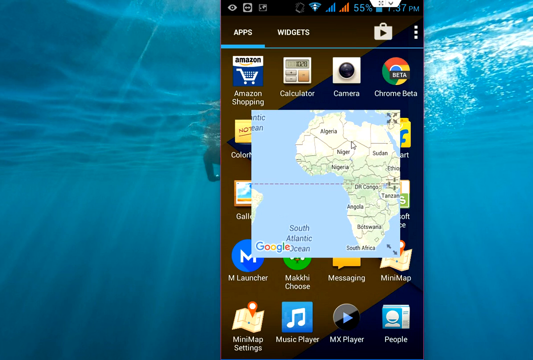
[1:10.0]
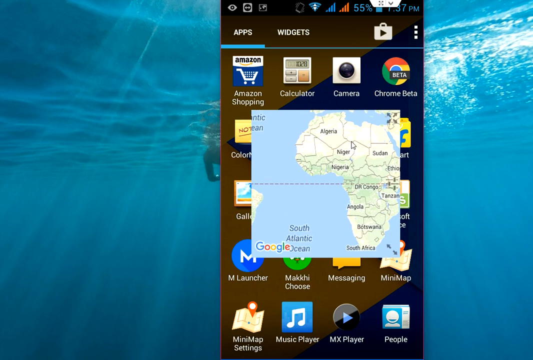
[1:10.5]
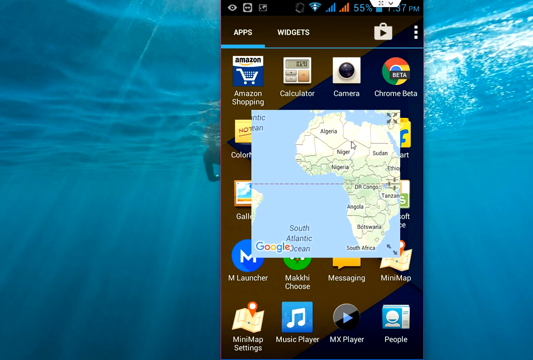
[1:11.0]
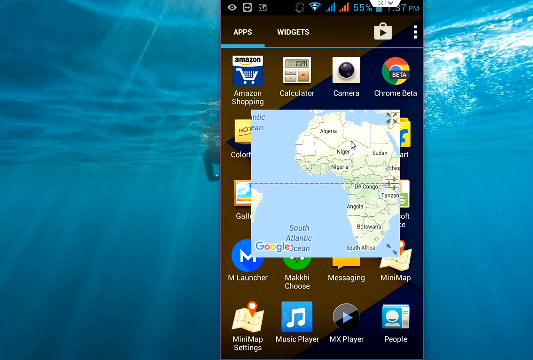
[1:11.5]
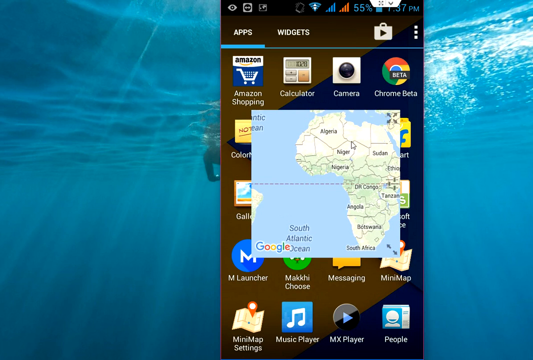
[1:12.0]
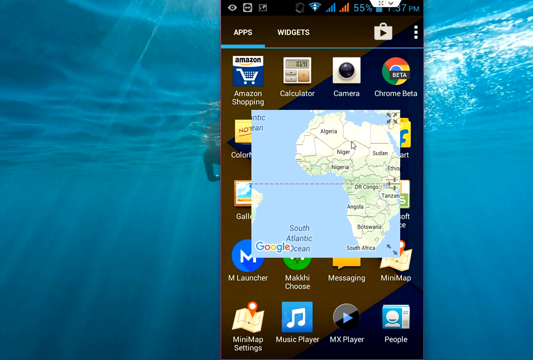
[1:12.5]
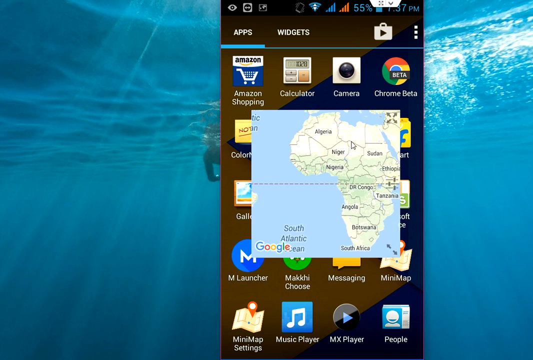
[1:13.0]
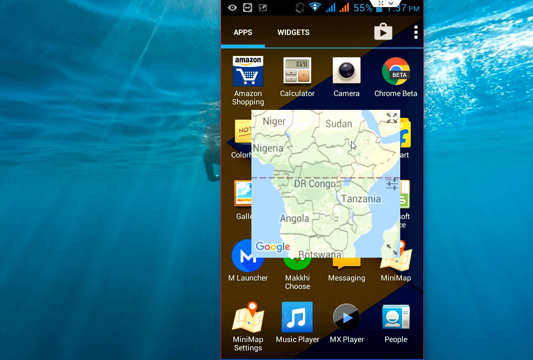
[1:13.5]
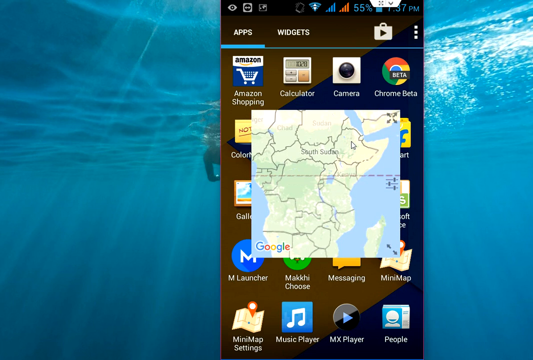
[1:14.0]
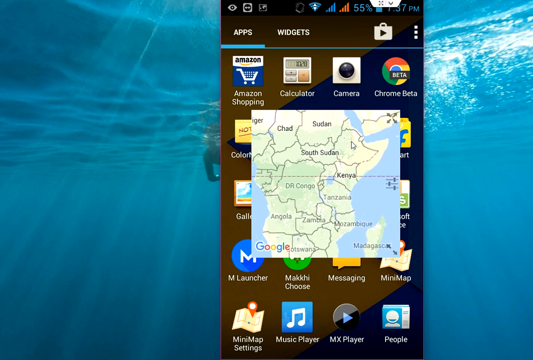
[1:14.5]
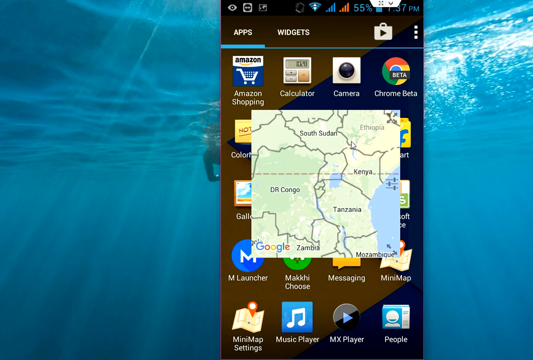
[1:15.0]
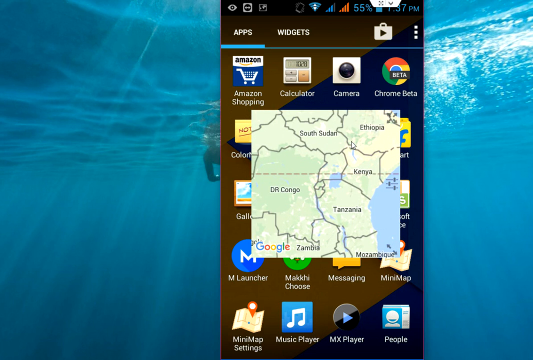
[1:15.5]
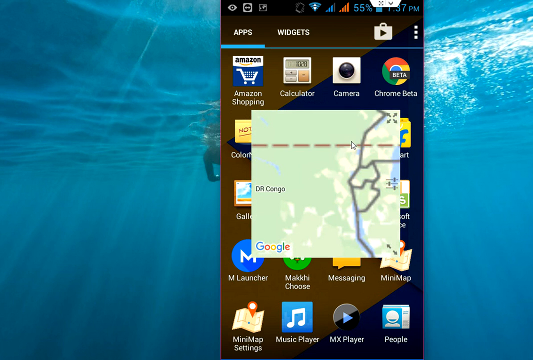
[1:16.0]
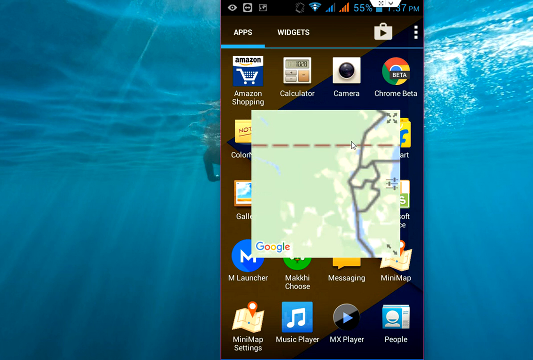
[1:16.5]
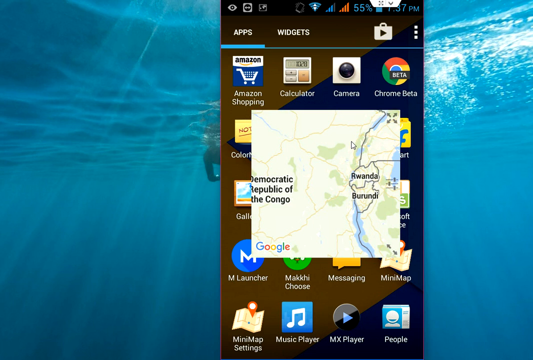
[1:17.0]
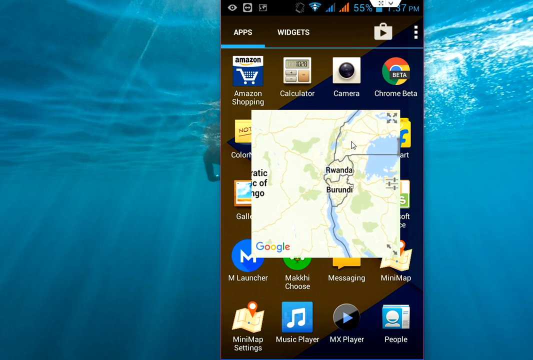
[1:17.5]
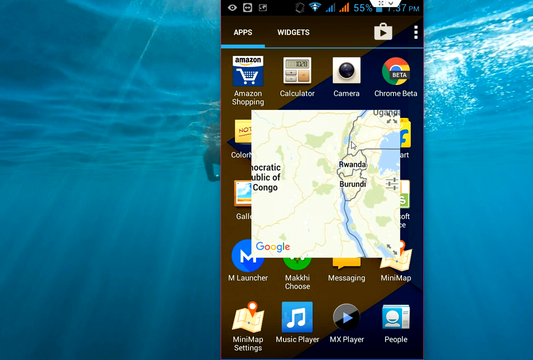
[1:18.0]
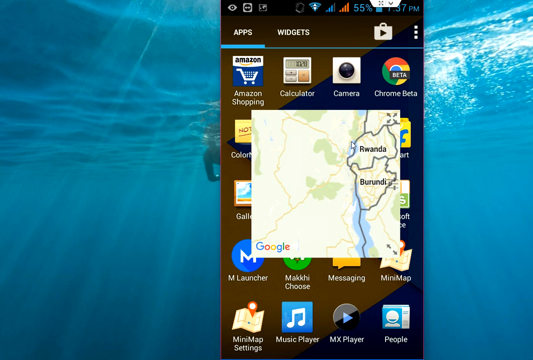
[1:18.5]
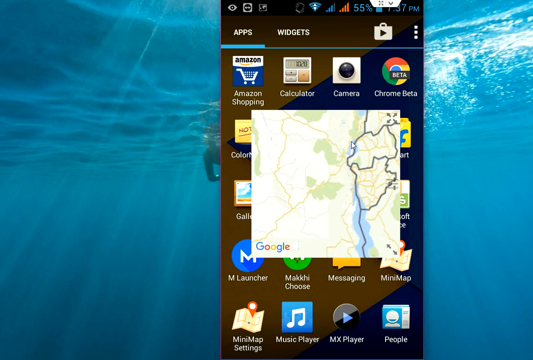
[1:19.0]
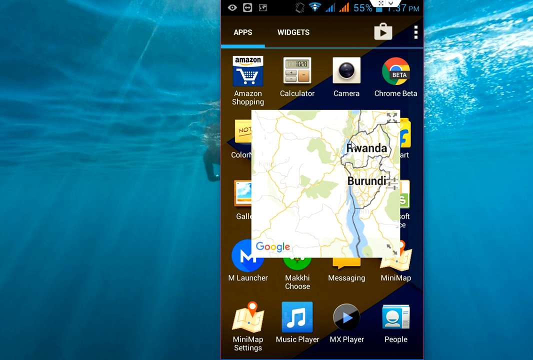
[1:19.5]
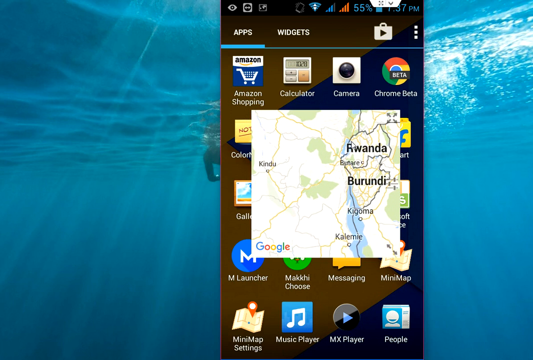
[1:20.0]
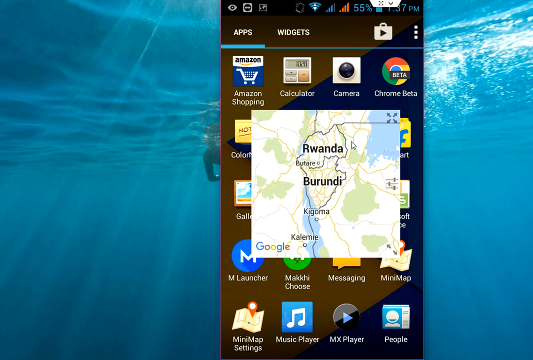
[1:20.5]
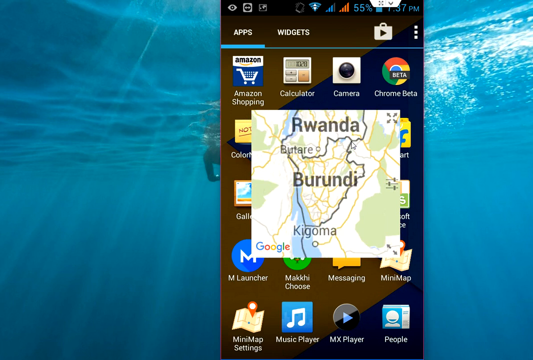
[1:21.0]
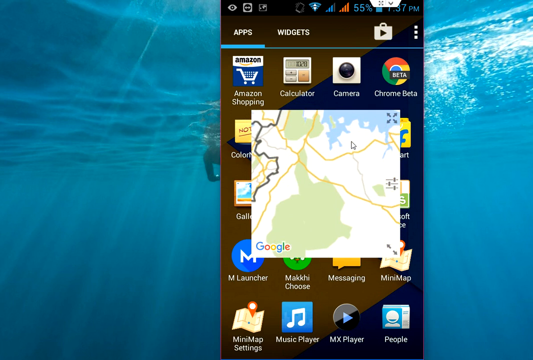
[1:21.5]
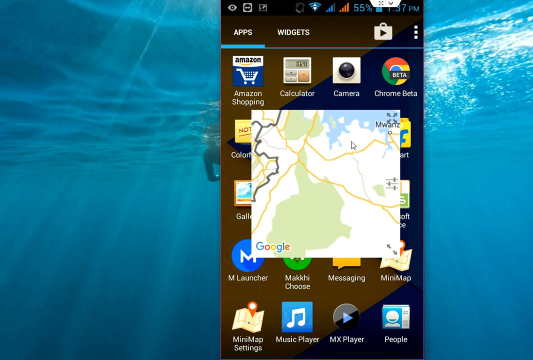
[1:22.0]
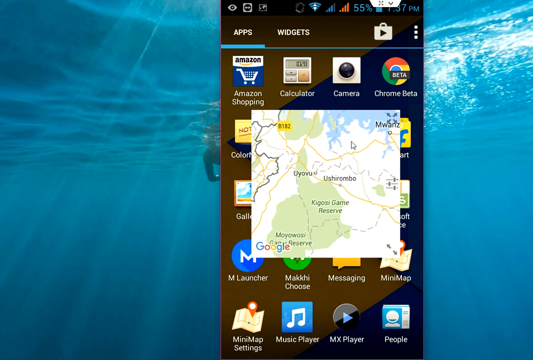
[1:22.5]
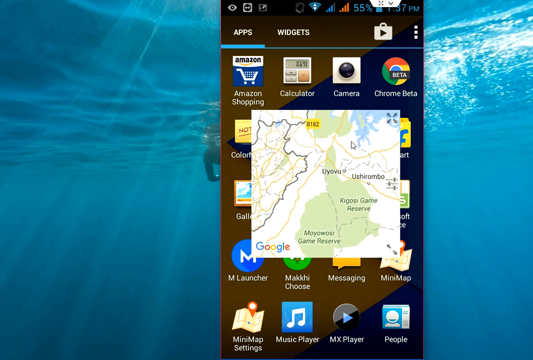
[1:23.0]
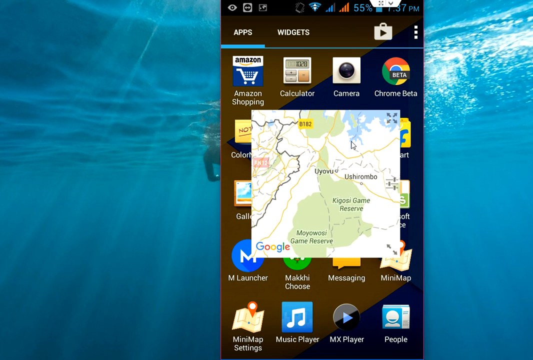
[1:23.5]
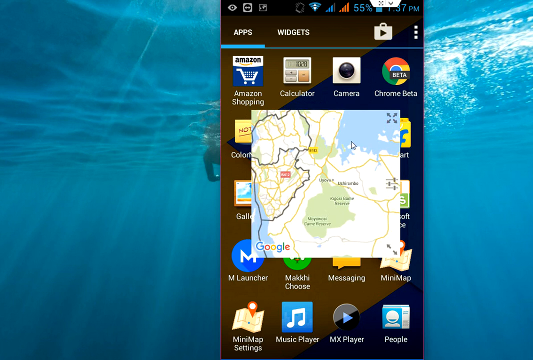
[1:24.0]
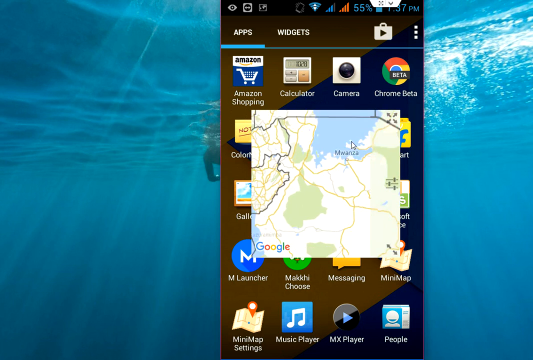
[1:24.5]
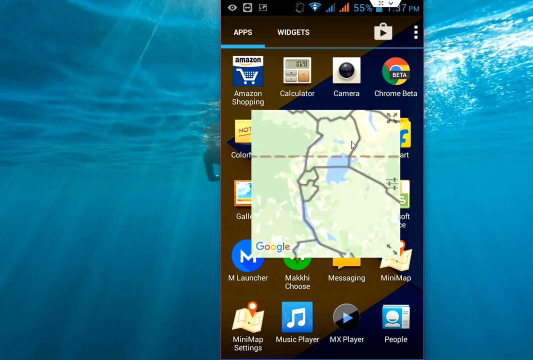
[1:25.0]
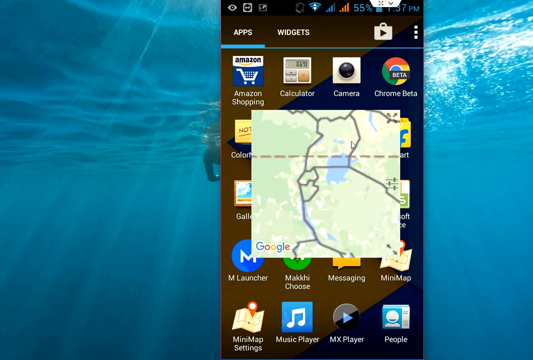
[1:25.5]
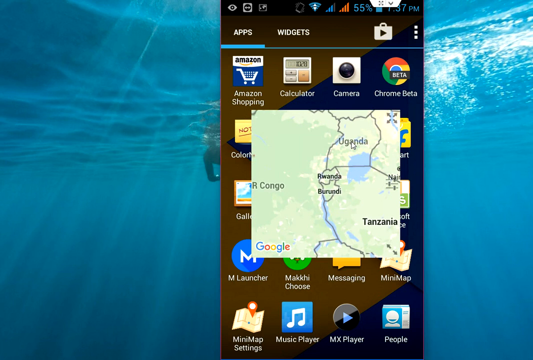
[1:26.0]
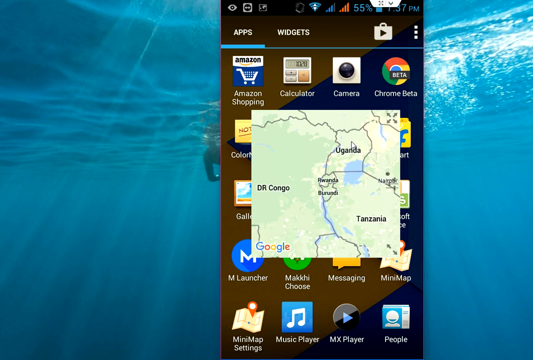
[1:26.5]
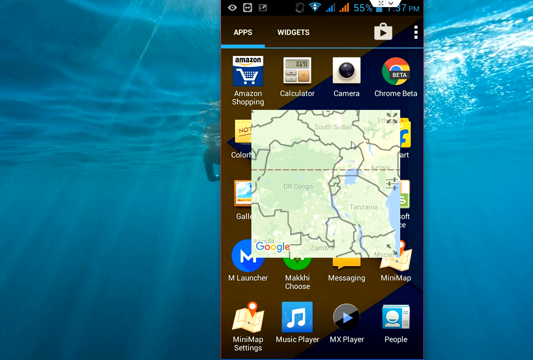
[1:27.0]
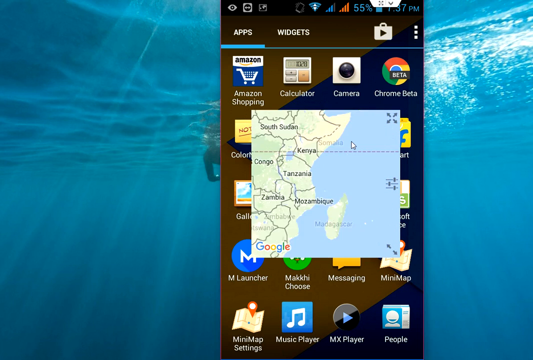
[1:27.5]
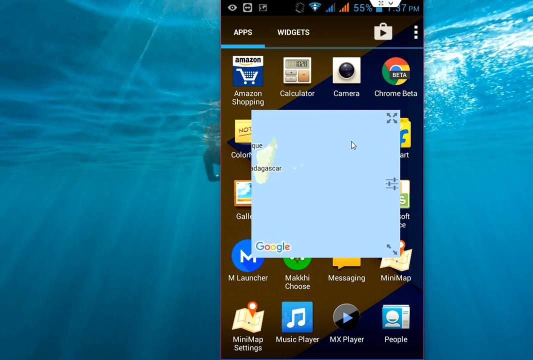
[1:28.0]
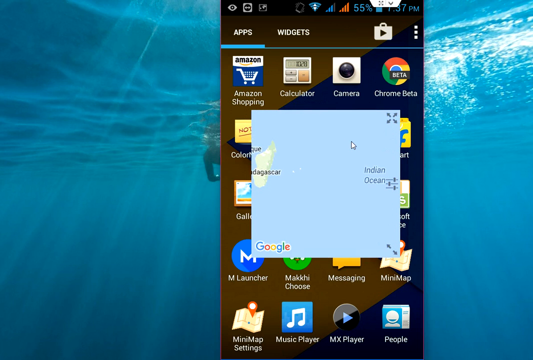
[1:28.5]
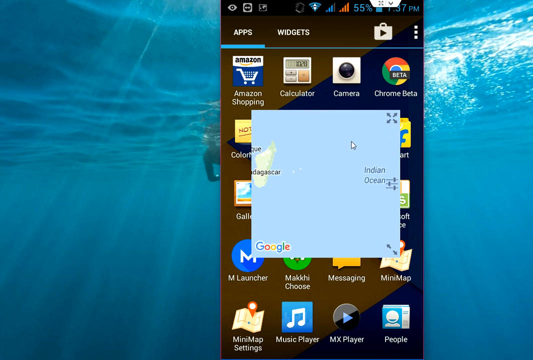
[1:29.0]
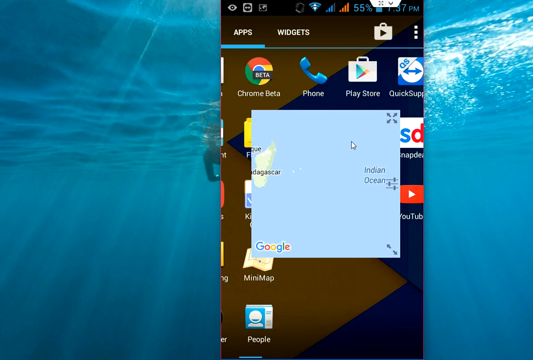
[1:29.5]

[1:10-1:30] The open water remains in the background, with sunbeams shining through it, and the swimmer wears black neoprene and a scuba mask. The phone is center-right, and the map of Africa remains on the screen. The arrow begins to zoom in on the map of Africa, showing Mozambique, Zambia, Congo, South Sudan, Ethiopia, Kenya and Tanzania. The map continues to zoom in, showing the Republic of Congo, then Rwanda and Burundi. The map zooms in quickly, too quickly to make out the cities, then begins to zoom out, showing Uganda, DR Congo and Tanzania. The map is then shifted to show Madagascar and the Indian Ocean. The movements of the arrow and the zooming in and out are erratic, leaving lots of text out of focus or only visible for a brief moment. The map remains overlaid on the phone screen, with the phone apps visible and distracting.